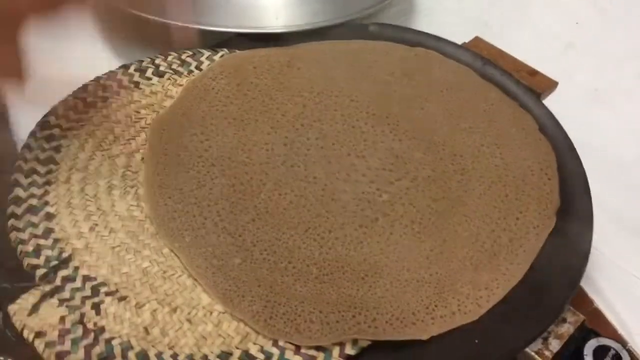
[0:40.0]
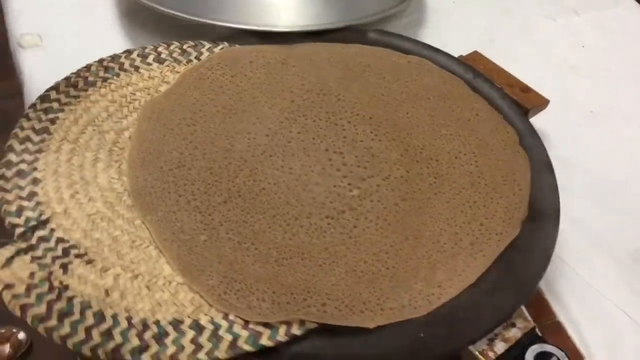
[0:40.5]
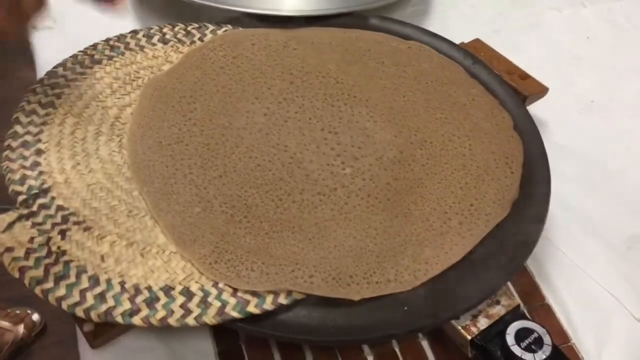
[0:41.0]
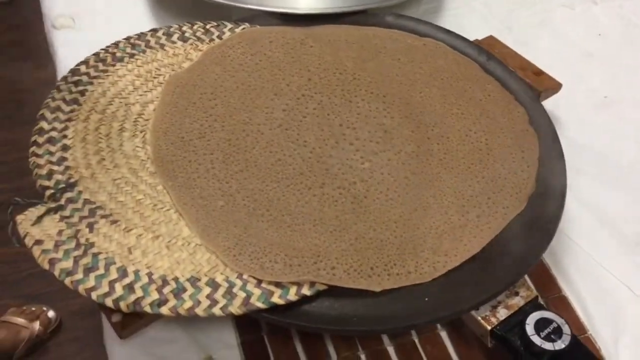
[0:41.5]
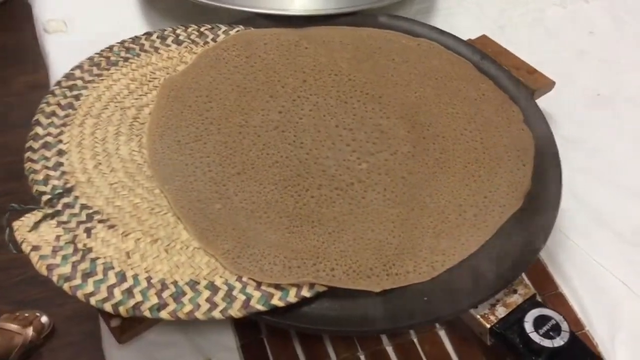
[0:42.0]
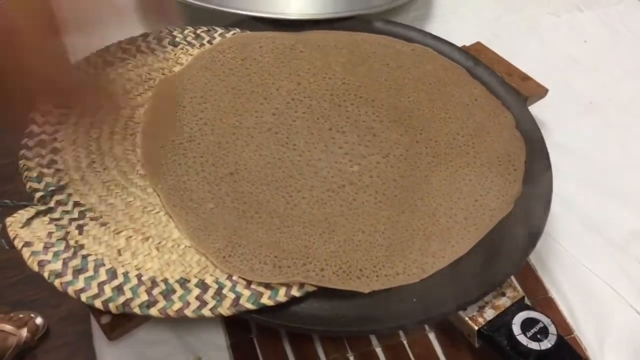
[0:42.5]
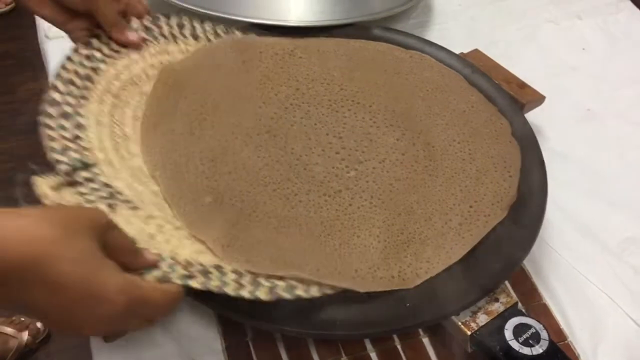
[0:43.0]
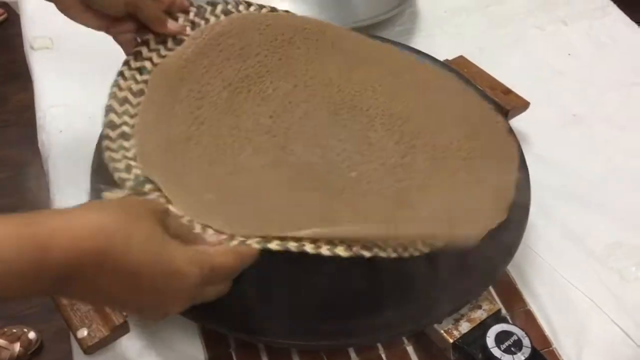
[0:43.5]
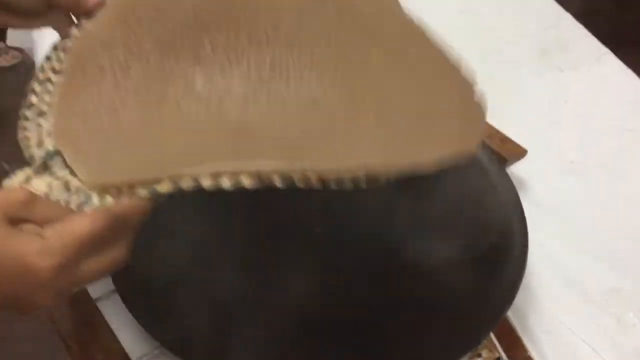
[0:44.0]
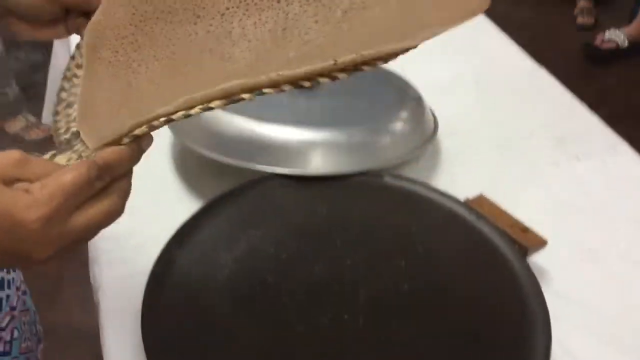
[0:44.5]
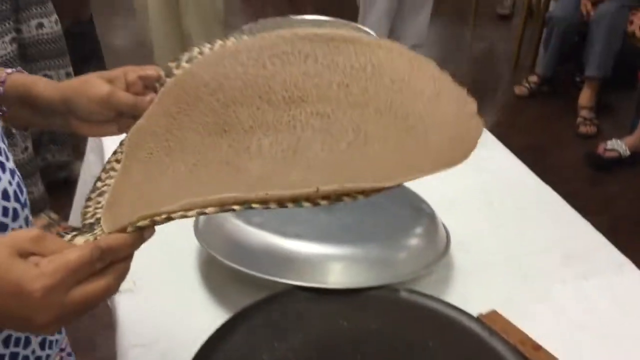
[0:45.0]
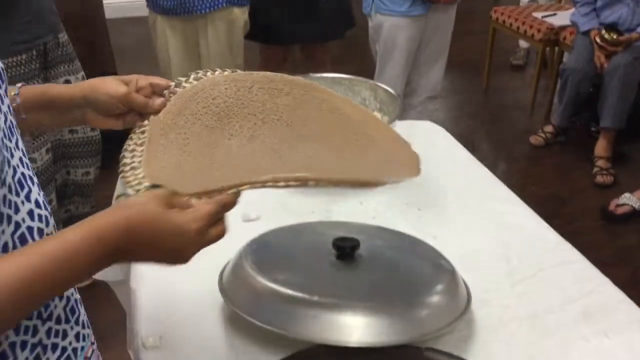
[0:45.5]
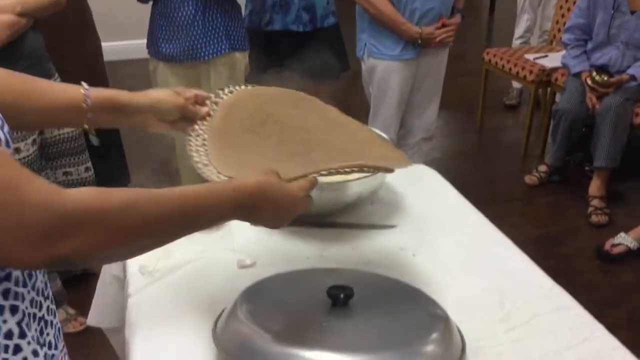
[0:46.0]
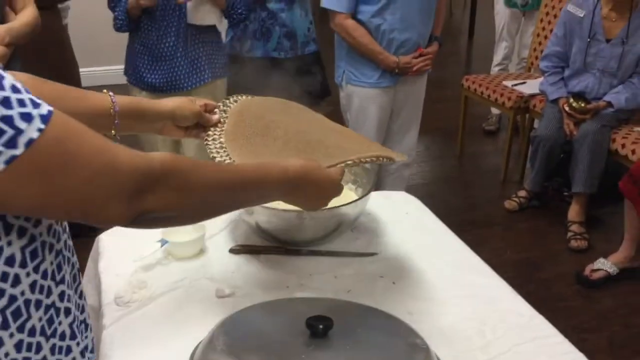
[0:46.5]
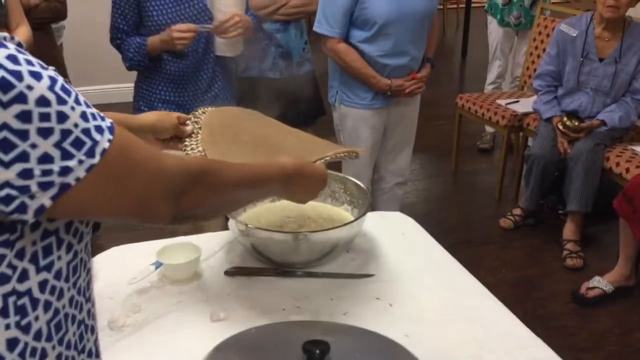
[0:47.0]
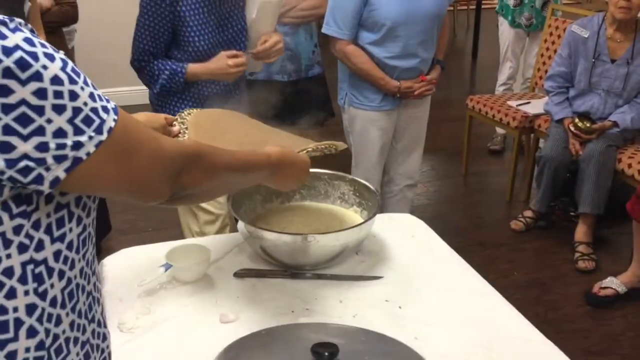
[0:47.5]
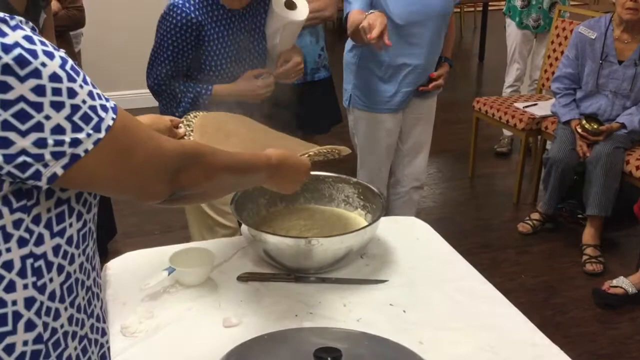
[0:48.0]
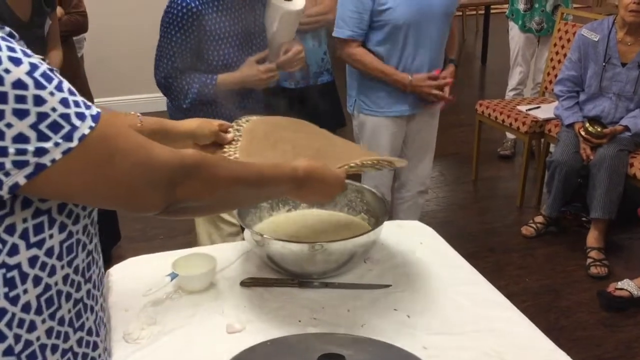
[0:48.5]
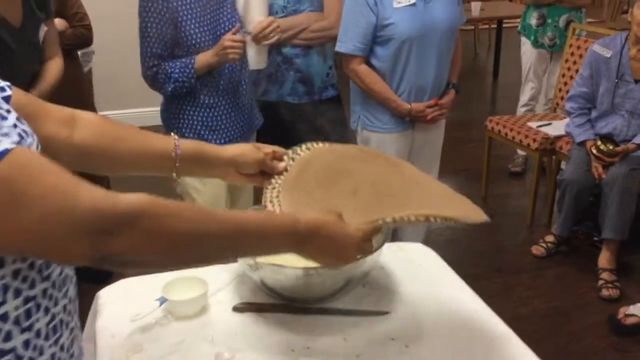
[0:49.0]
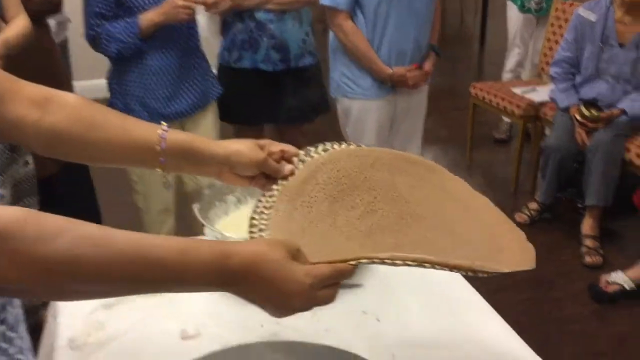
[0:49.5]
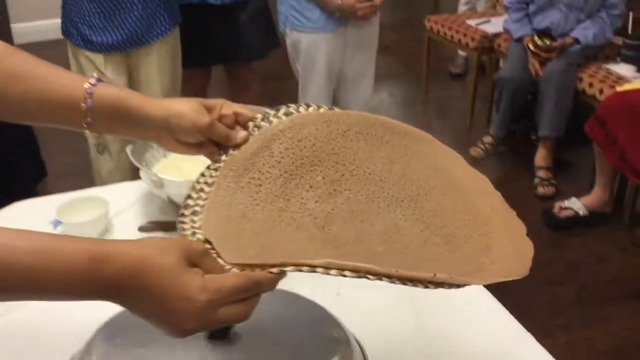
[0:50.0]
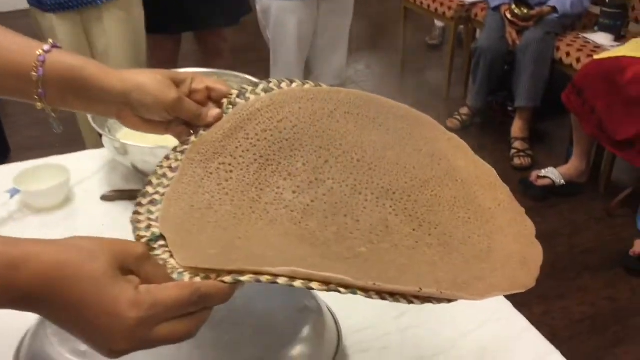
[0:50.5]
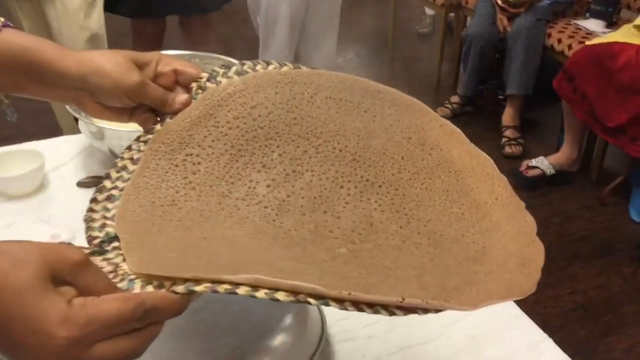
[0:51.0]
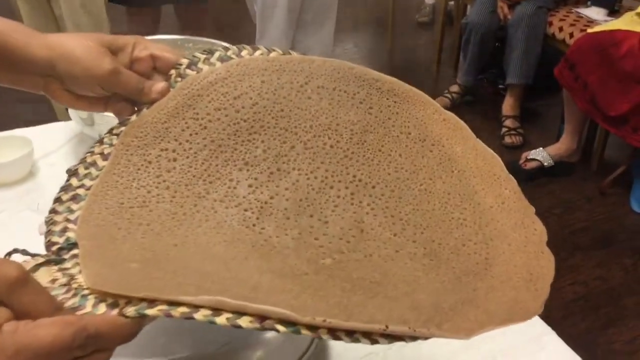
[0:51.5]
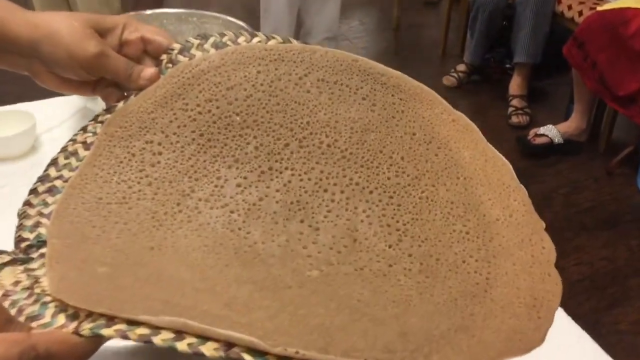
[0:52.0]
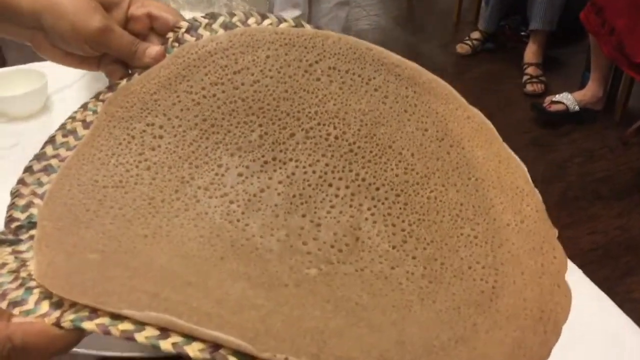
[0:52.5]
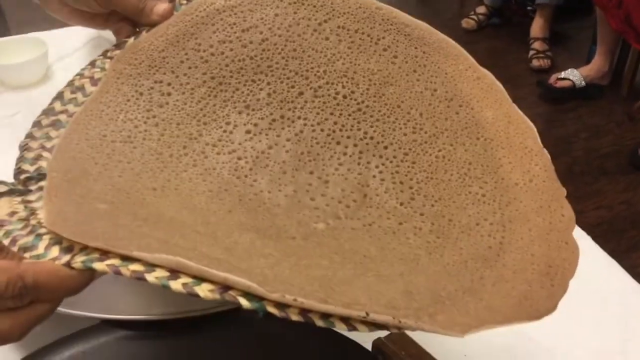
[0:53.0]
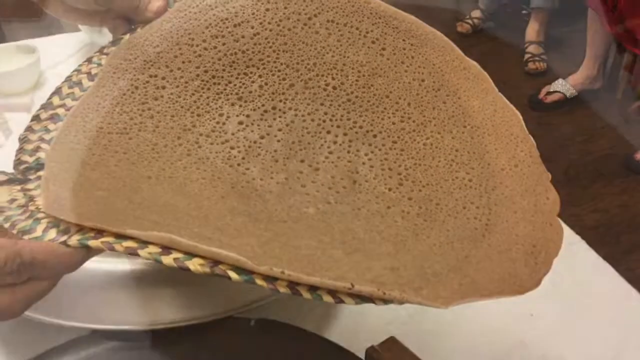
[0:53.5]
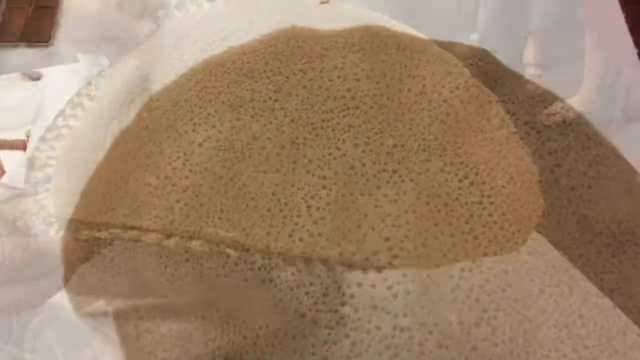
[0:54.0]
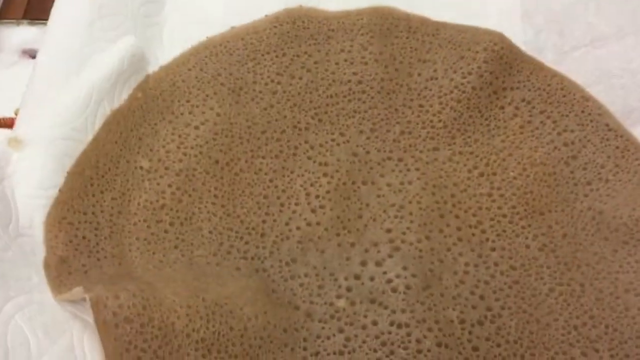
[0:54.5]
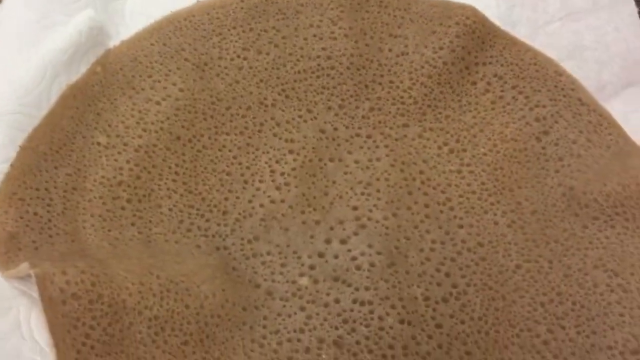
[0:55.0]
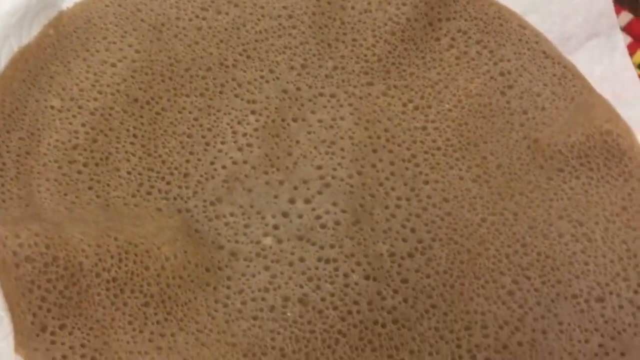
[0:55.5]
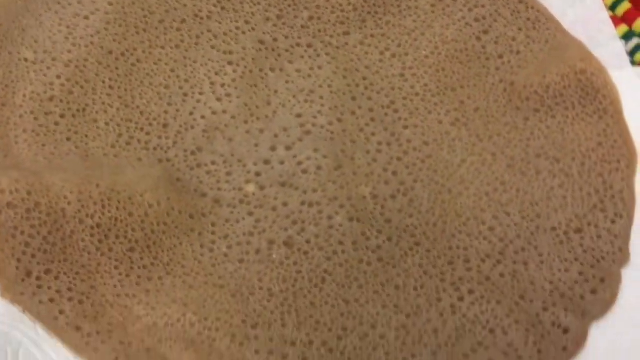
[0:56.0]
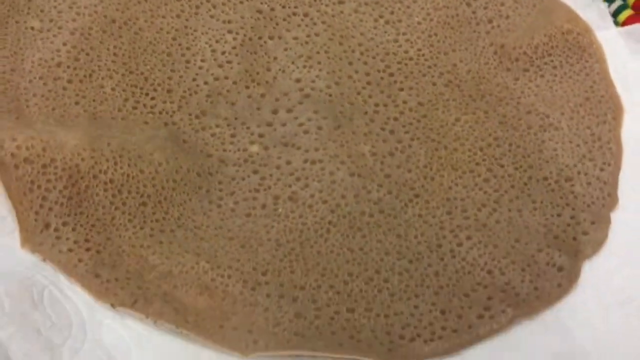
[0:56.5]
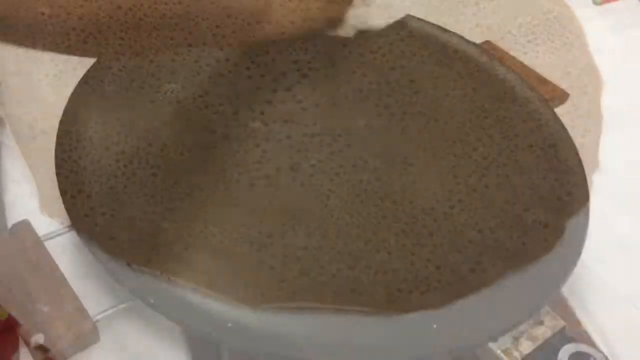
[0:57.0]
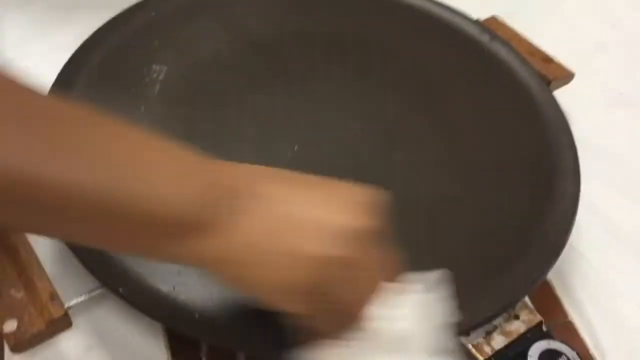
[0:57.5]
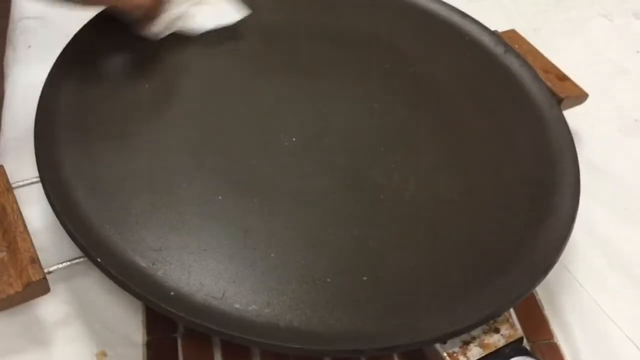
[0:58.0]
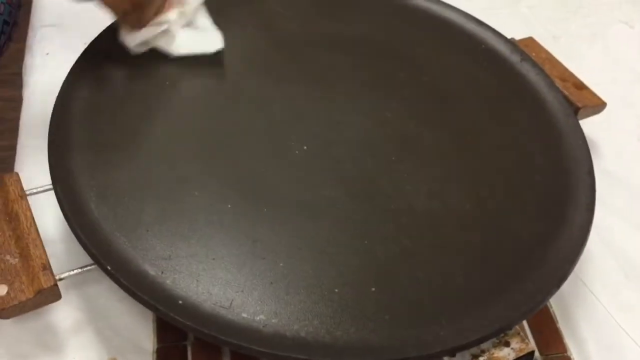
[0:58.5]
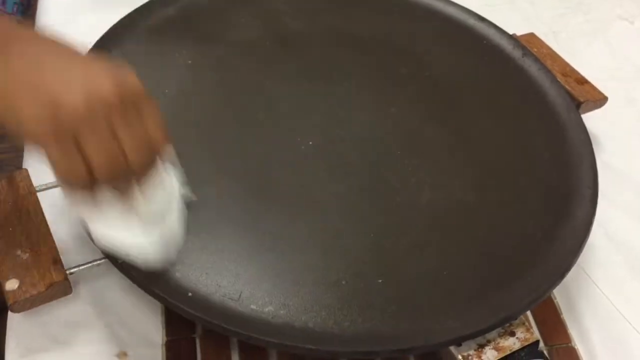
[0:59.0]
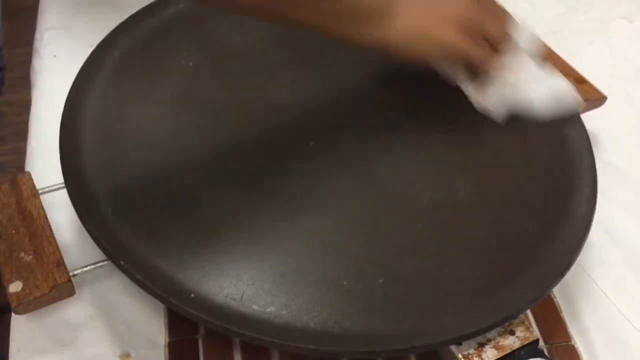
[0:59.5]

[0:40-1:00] Steam still flows upward from the food. The person places both hands on the circular mat and scoops the pancake up into the air to about hip level. The camera pans up, revealing the white rectangular desk with a metal lid just to the side and a silver mixing bowl behind. In the background are three to five people: three are standing, with only their waists and trousers visible, and two on the right-hand side are sitting down, with only their feet and lower bodies visible. The chairs are wooden, reddish with a black pattern, and set in a row next to each other. The camera pans up slightly more and two people in the background move slightly closer. The one on the left, wearing a blue and white top, walks closer and looks at the item, while the person on the right points at the food with their right index finger. The woman holding the mat has her arms outstretched, showing the food to the people looking at it. The camera zooms in on the food again, and it is slightly bent from the weight of the food. After a transition there is a top-down view of the food, followed by a shot of a woman cleaning the hot plate with a paper towel.